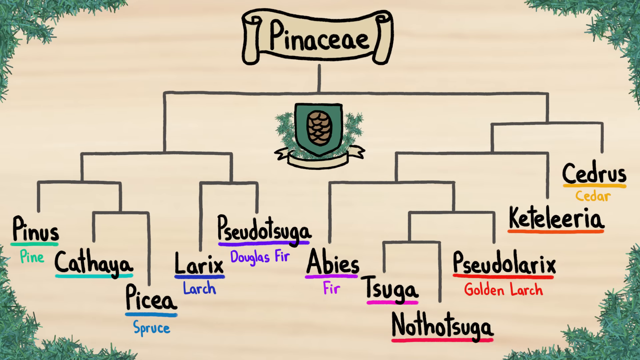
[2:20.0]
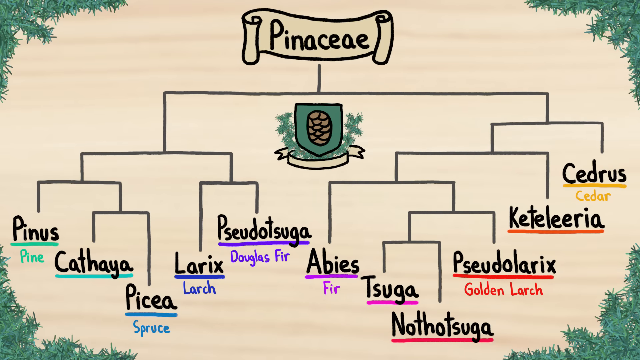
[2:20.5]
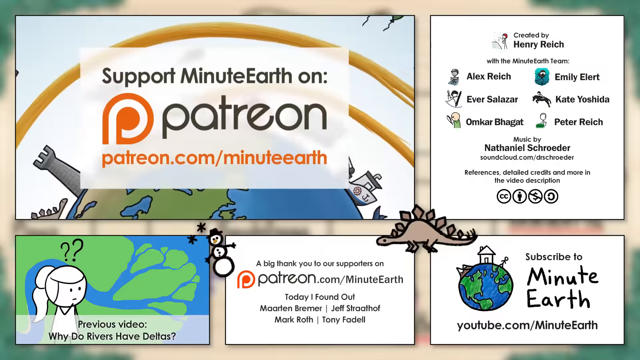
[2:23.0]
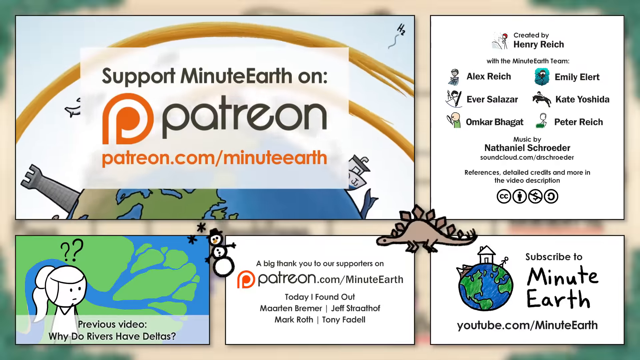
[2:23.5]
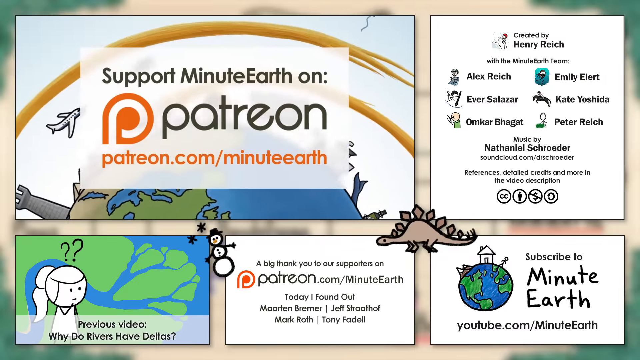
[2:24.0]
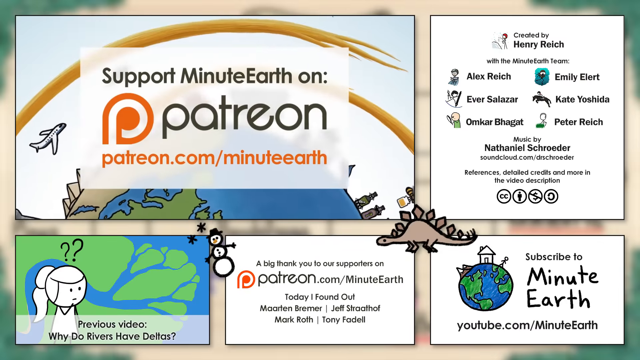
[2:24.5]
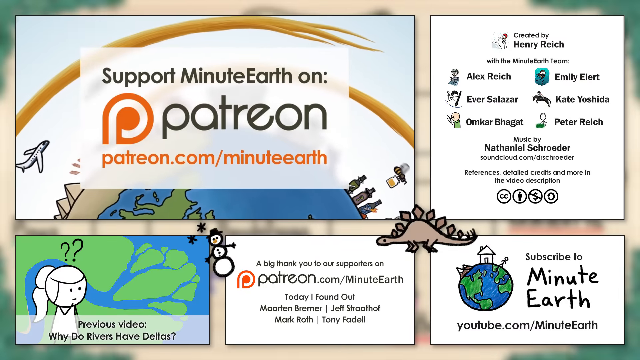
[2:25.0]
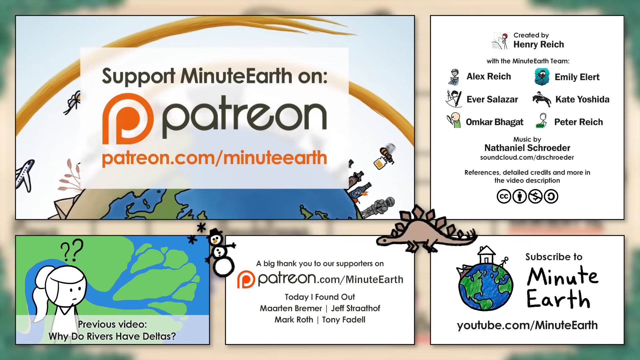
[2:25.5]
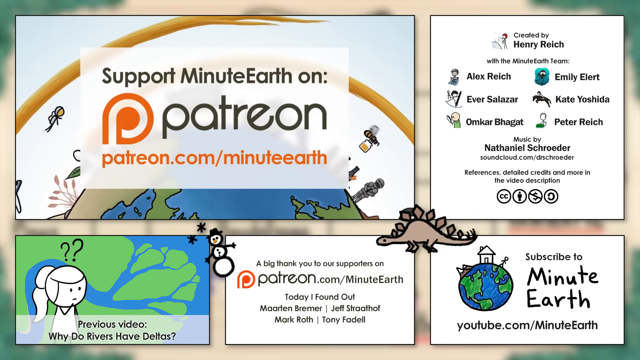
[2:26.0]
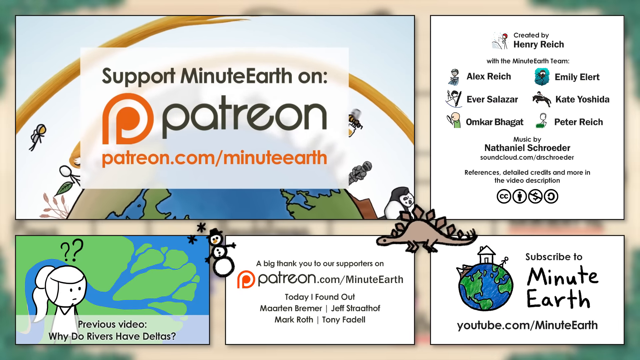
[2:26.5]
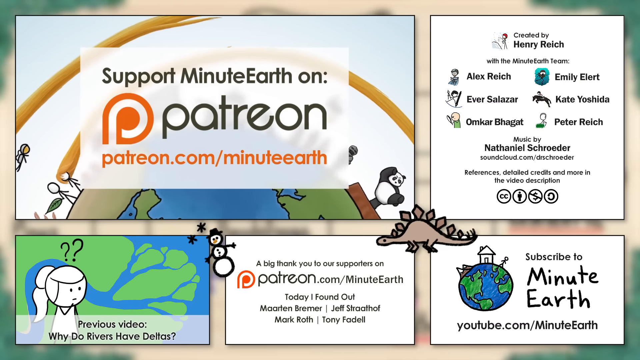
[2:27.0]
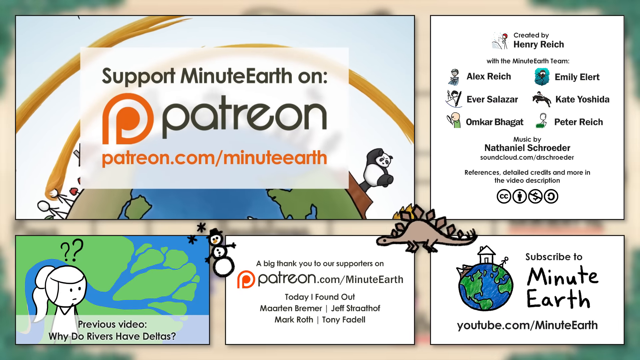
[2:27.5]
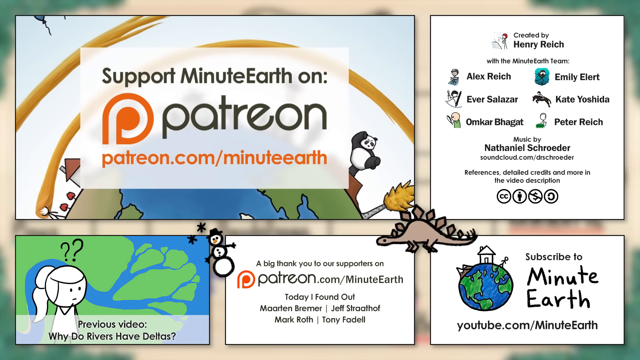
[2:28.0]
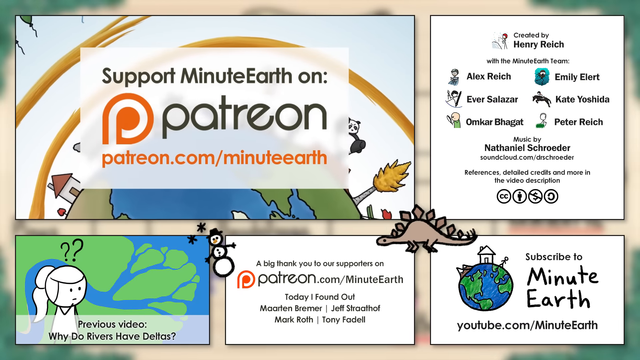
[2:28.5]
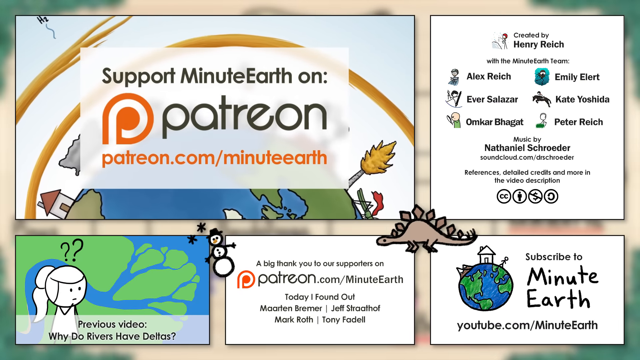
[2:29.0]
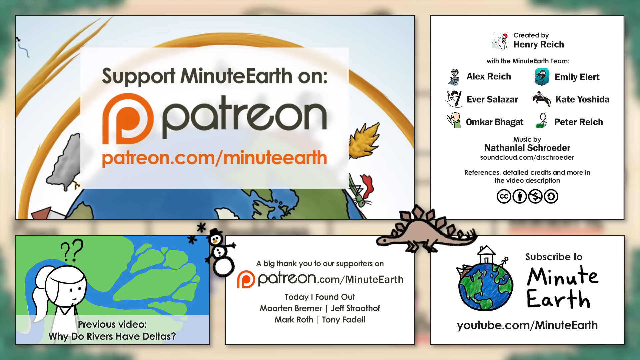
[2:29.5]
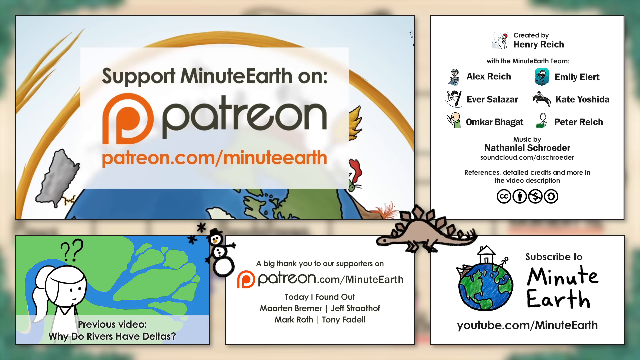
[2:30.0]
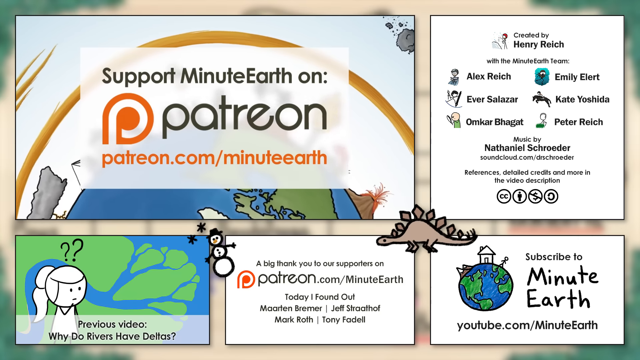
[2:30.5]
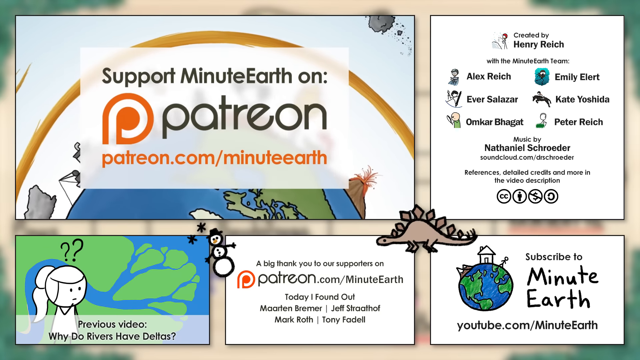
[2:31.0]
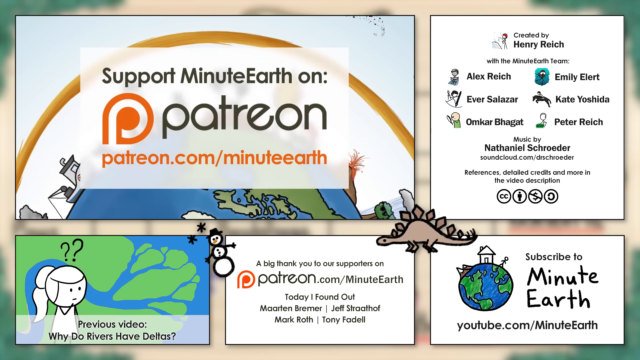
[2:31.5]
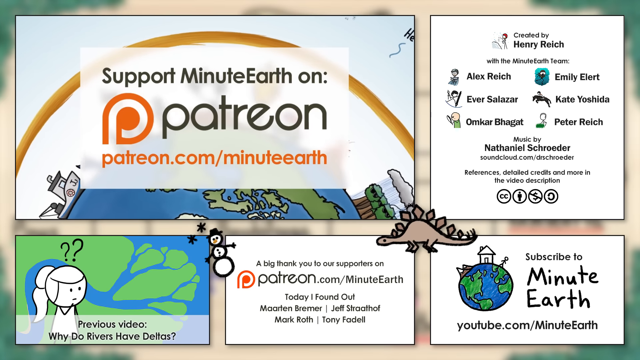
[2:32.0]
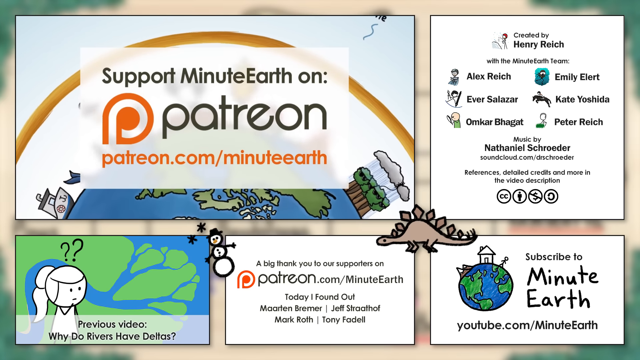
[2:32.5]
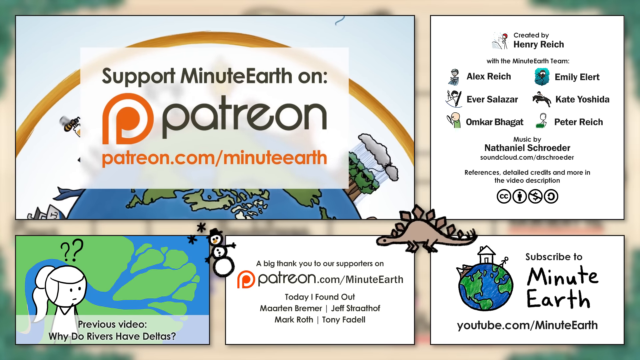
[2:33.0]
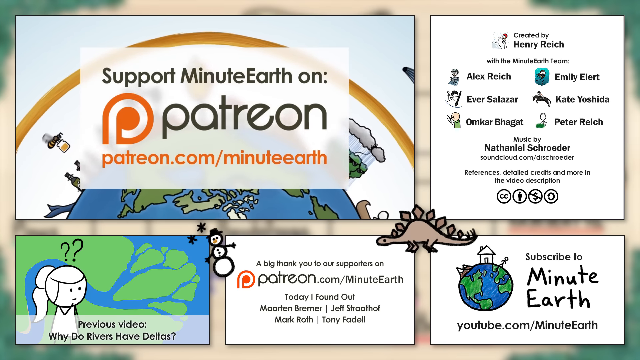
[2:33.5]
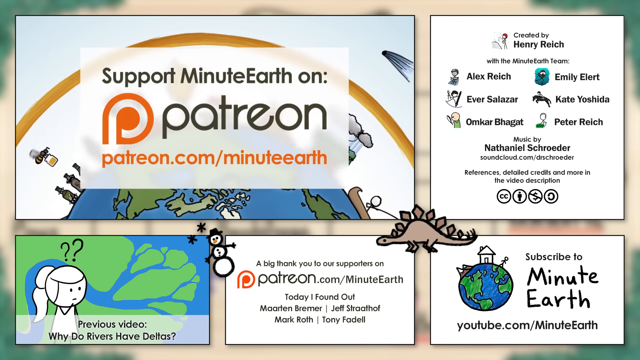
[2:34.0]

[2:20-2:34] A decorative-looking screen appears, with green leaves and pine needles in the corners, along the top and bottom, and on both sides. At the very top is what looks like an opened scroll reading "Pinesia". Underneath is a picture of a pine cone with some pine needles and a banner around it. Bars then come out in lines, showing Pinesia as the original pine tree from which the modern-day pine, the spruce, the larch, the fir, the golden larch, the cedar and a few others evolved. Finally the screen switches to a page that says "supportminuteearth.com" and "patreon.com" with a few options for links to different categories.